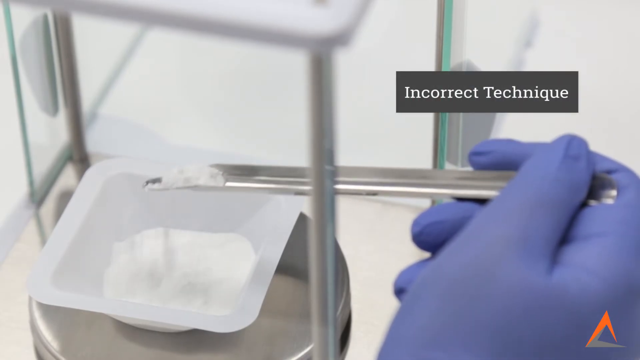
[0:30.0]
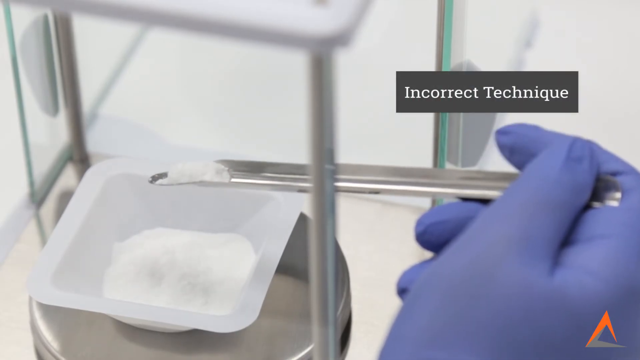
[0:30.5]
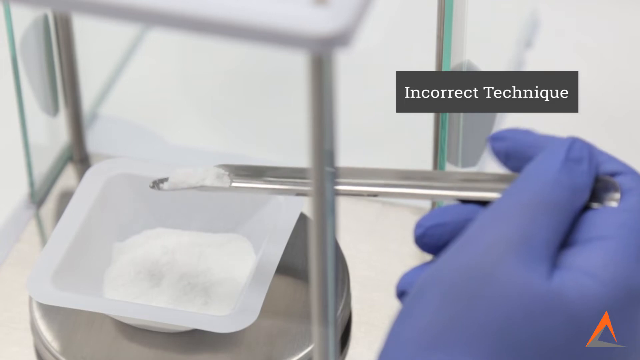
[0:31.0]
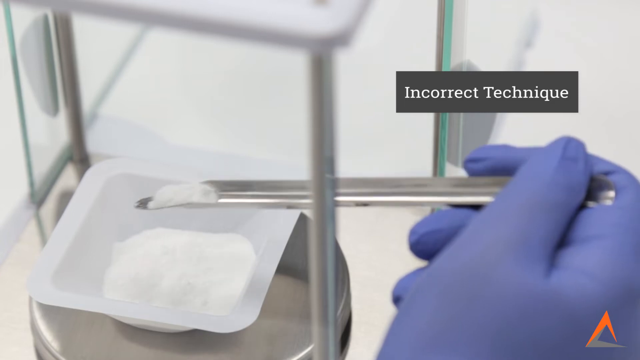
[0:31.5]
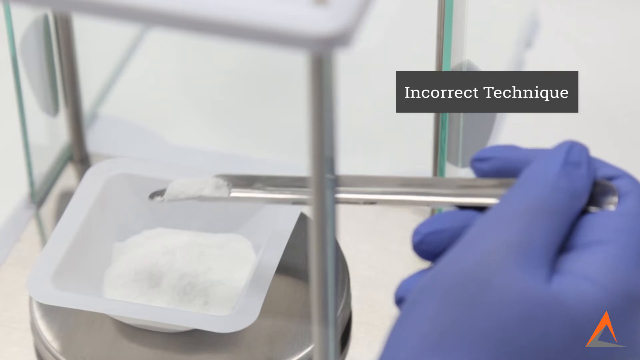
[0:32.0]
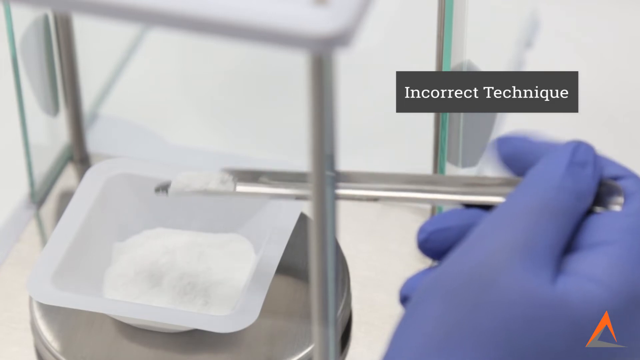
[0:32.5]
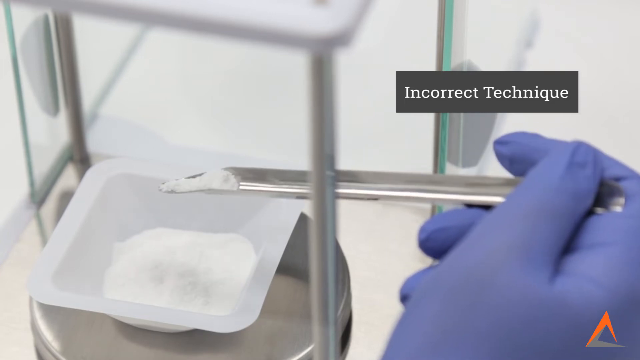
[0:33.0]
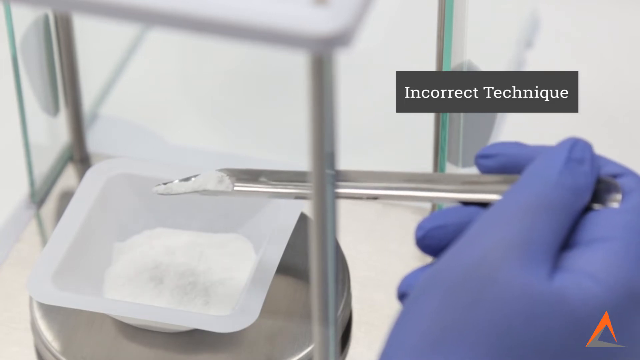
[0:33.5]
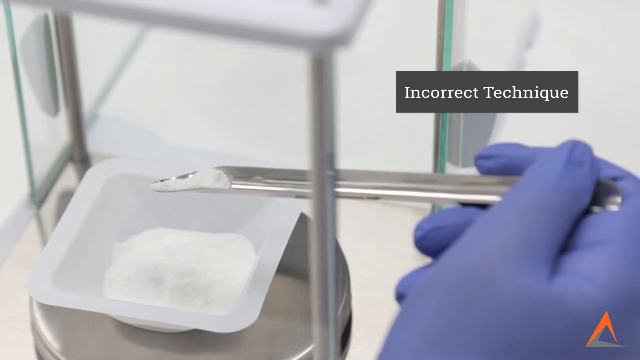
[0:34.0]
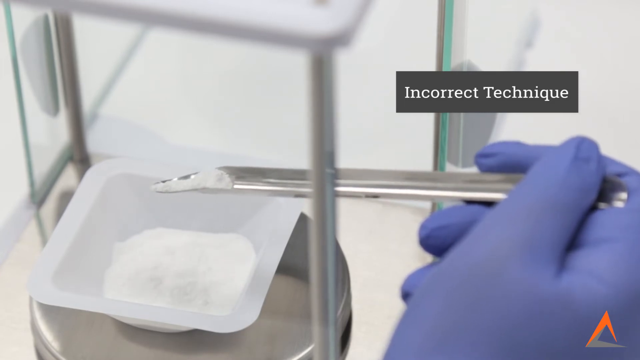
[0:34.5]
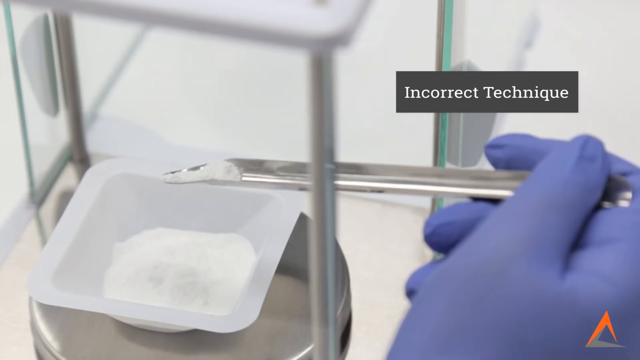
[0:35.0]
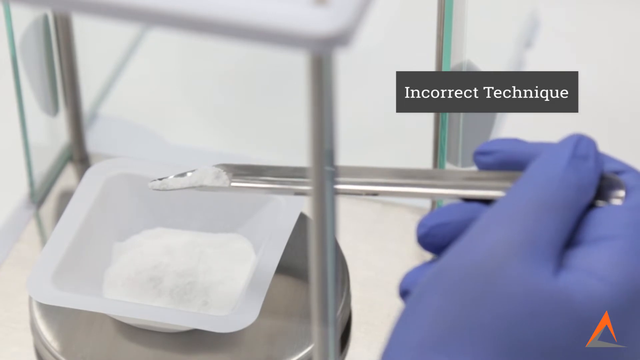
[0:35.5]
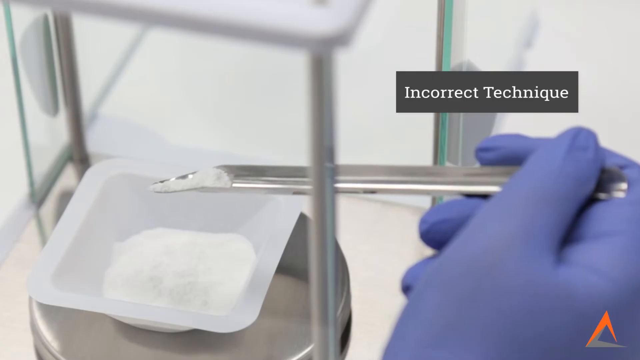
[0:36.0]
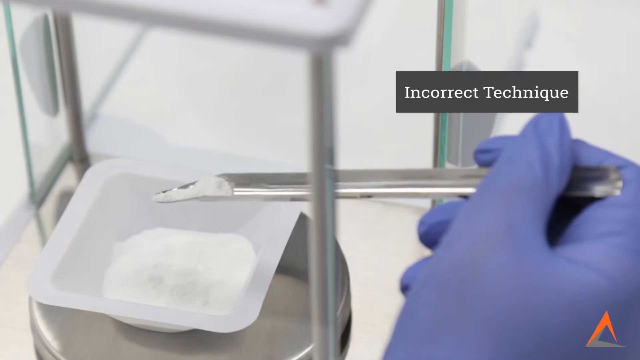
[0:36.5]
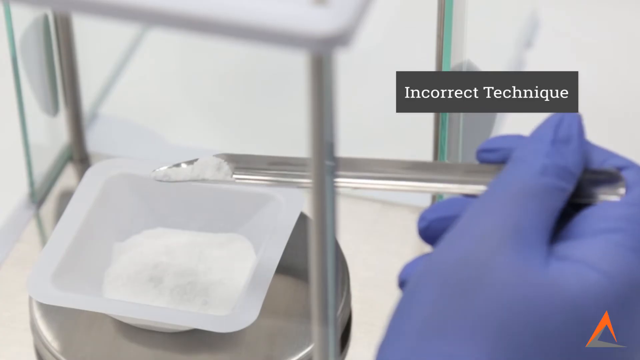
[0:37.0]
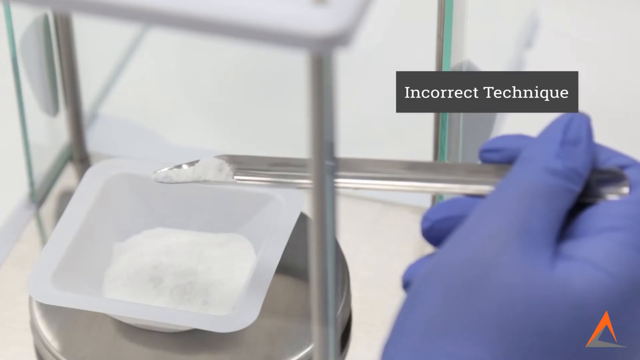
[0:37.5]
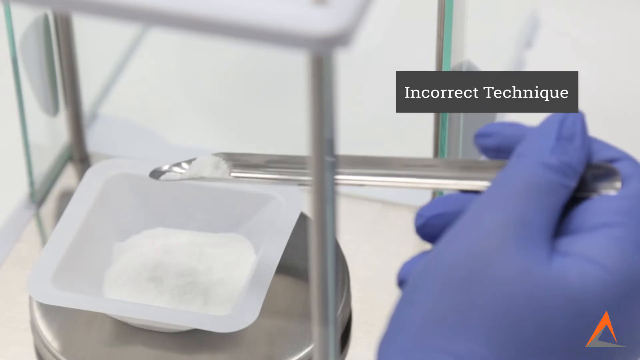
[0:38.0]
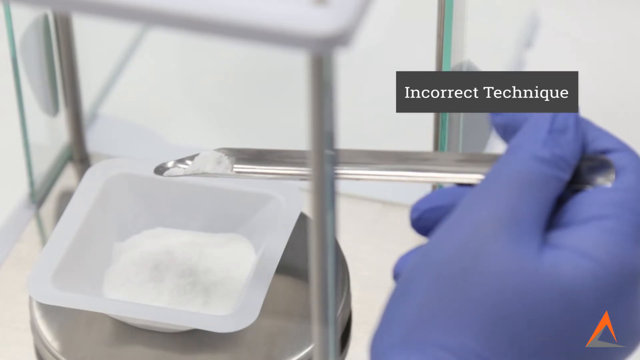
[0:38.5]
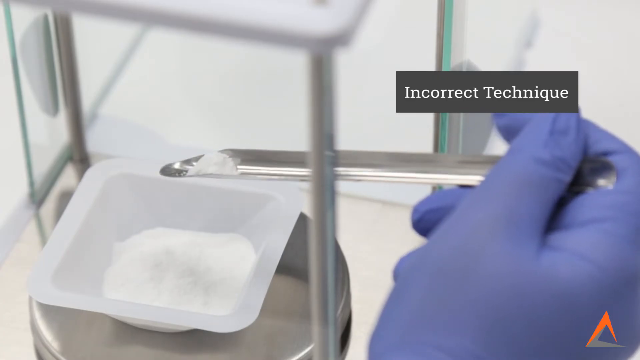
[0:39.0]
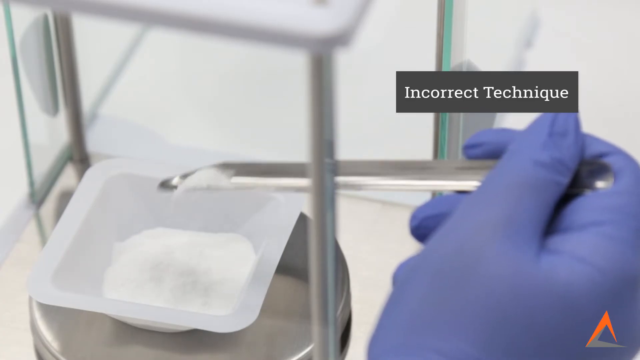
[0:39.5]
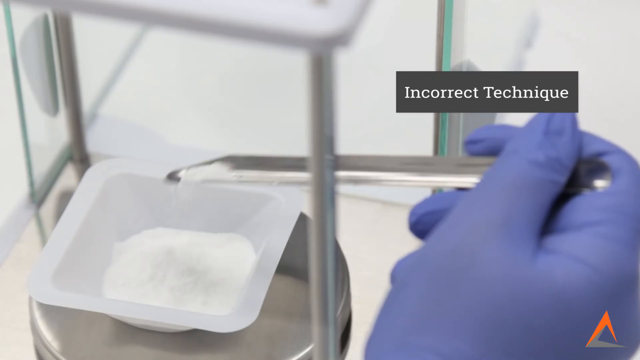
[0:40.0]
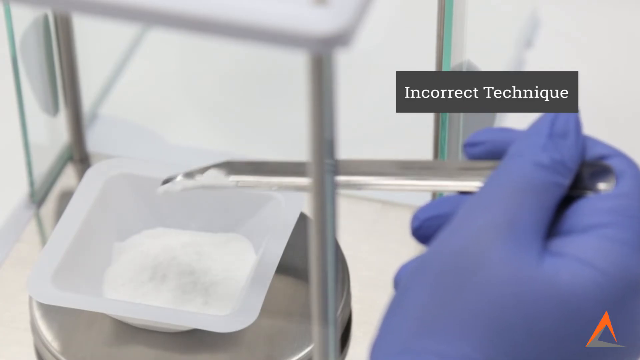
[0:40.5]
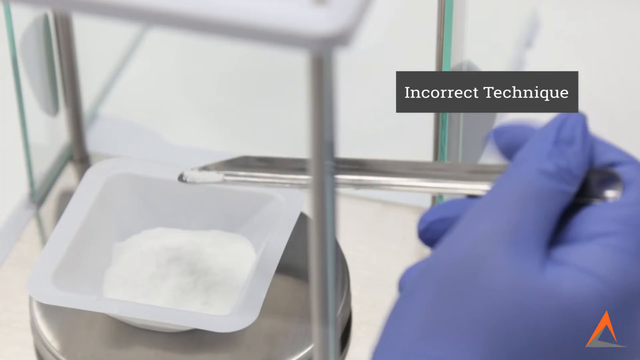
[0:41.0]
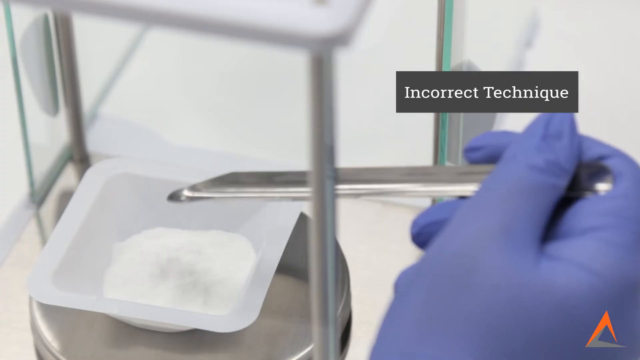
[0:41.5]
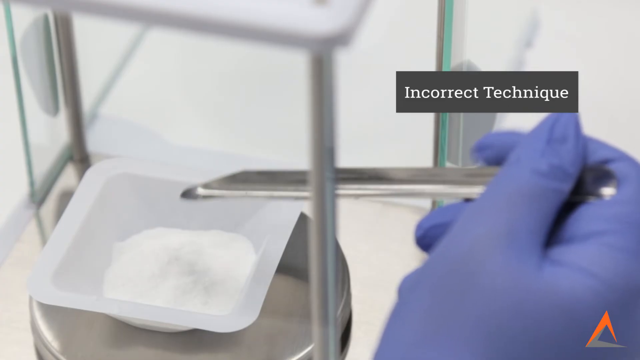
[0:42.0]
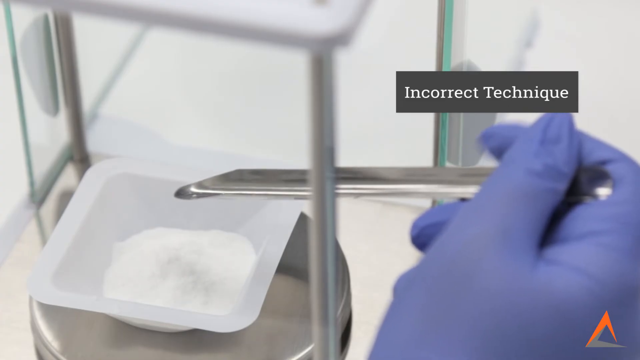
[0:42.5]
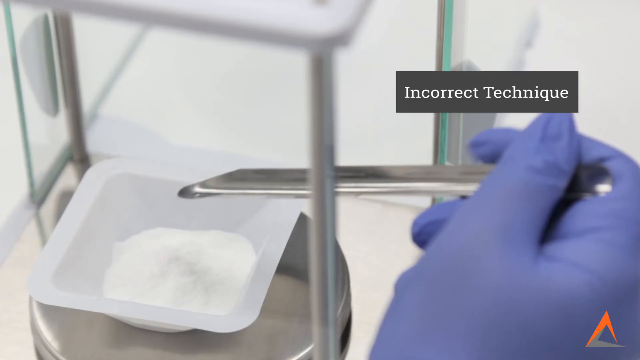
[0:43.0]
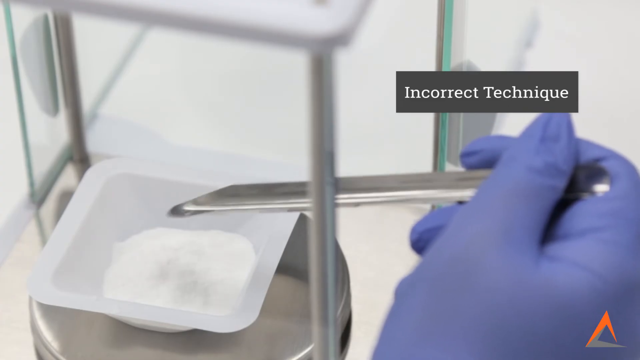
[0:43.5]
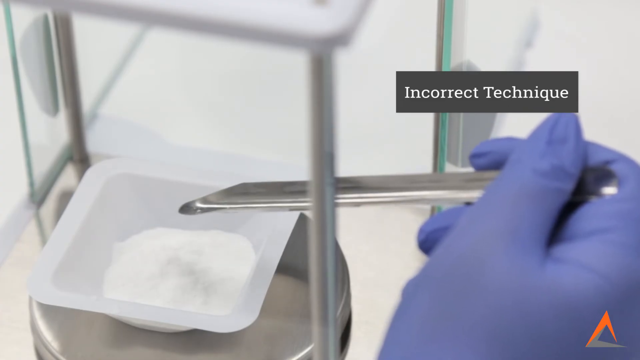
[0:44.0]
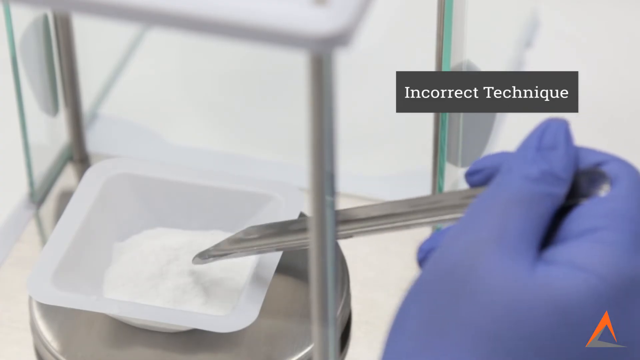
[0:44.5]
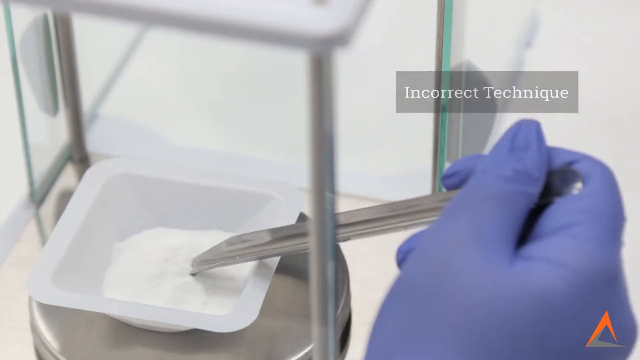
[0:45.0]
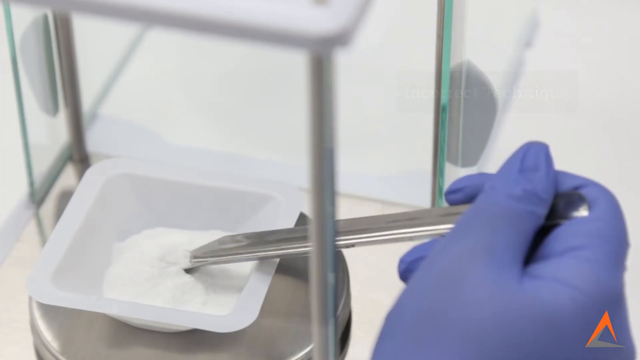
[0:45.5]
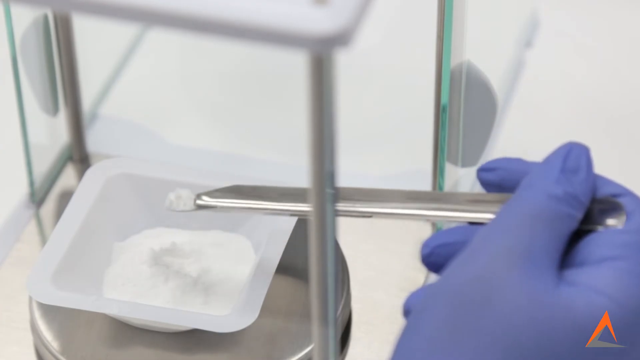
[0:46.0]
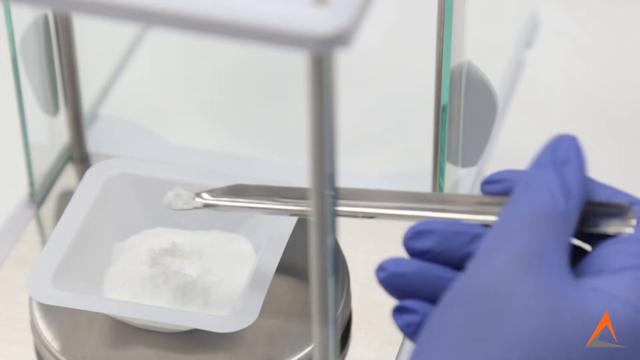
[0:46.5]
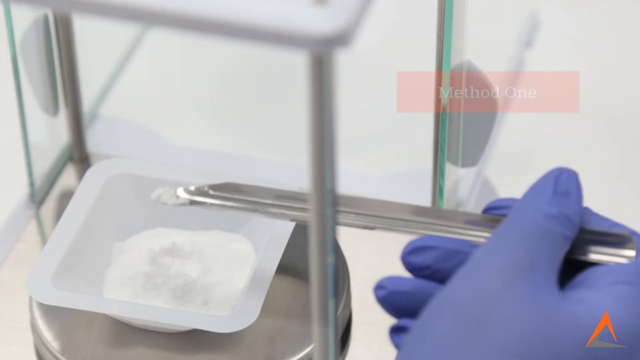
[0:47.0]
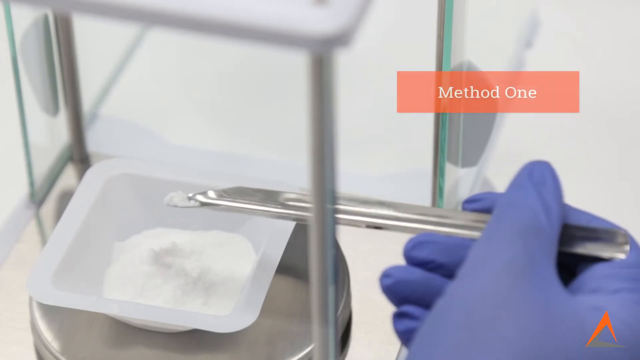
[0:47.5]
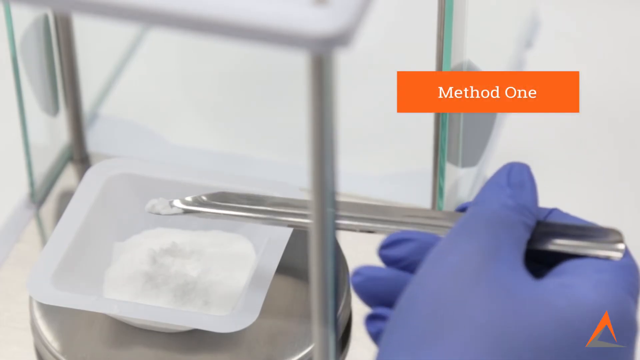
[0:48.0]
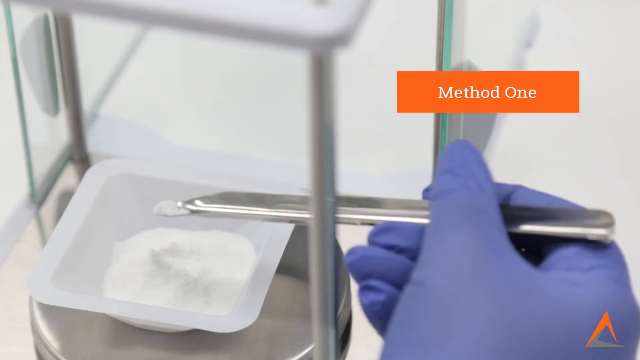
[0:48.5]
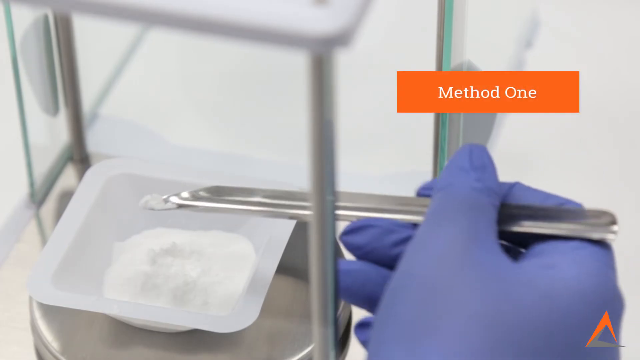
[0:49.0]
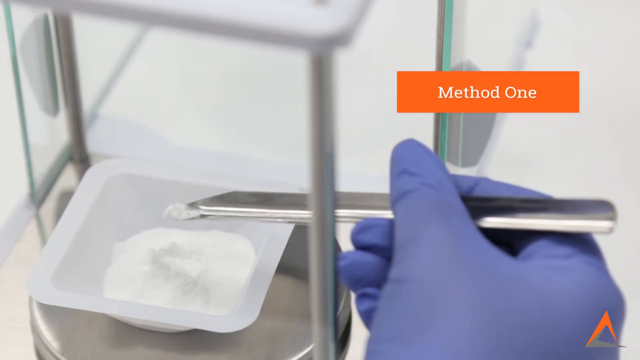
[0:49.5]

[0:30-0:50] On the left side of the screen is a small, shiny, circular metal platform with a small square plastic container on it, and white powder lies in the bottom of the container. On the right, a person's hand in a purple rubber glove holds a shiny metal tool with a small scoop at the end containing some of the white powder, held over the plastic container. Above, in a black rectangle, "incorrect technique" is written in white. The man taps the tool with the index finger of the hand holding it, and a little of the powder shakes out back into the white container. He keeps shaking it until all of it comes out into the container, then takes another small scoop and holds it above the container.